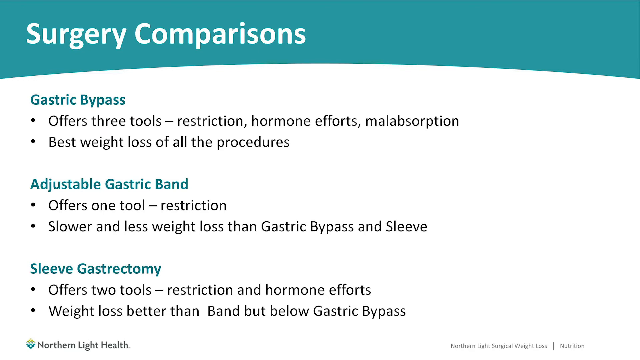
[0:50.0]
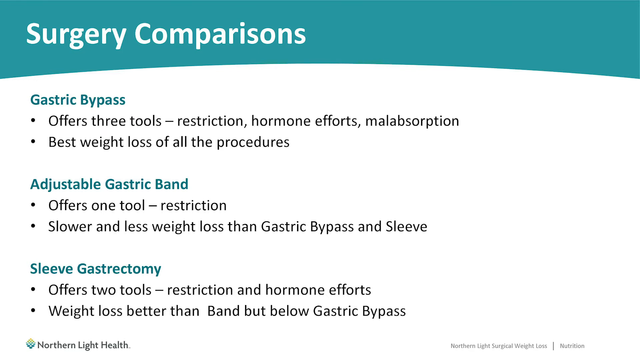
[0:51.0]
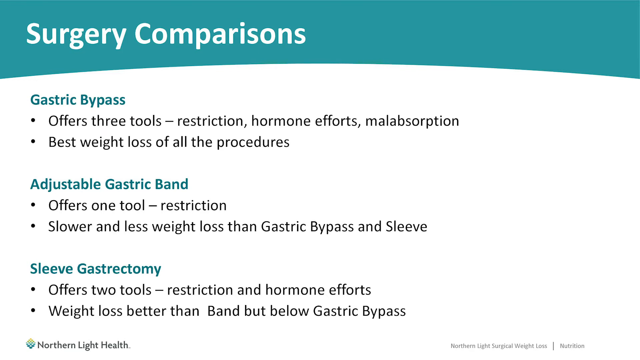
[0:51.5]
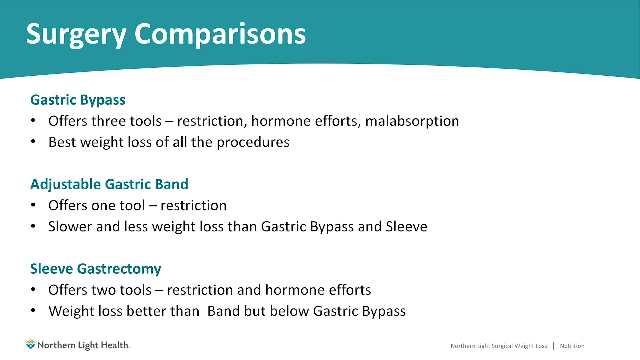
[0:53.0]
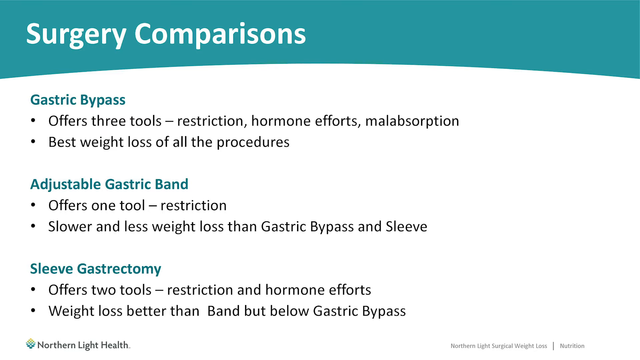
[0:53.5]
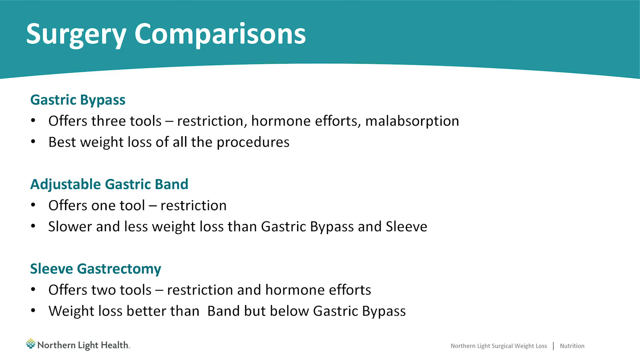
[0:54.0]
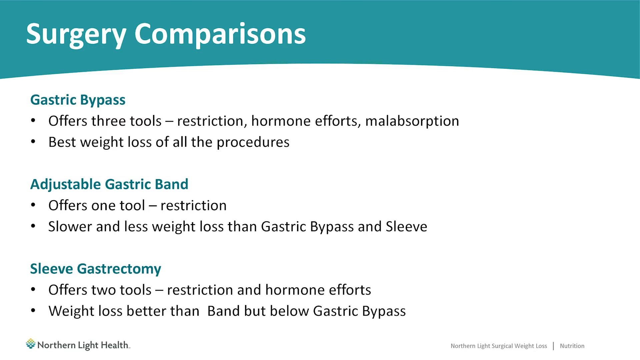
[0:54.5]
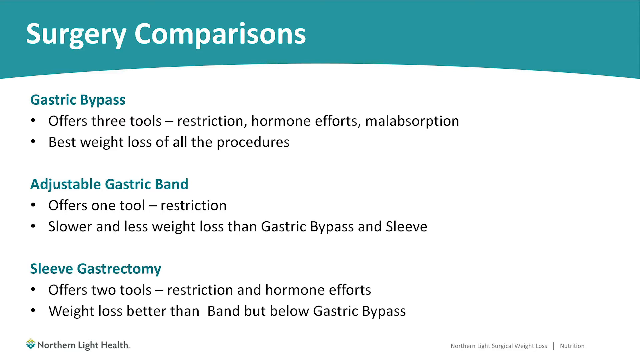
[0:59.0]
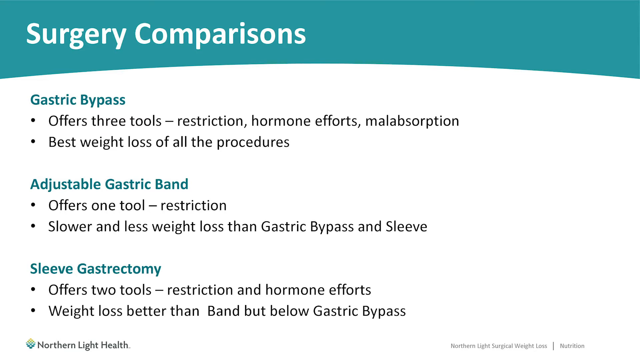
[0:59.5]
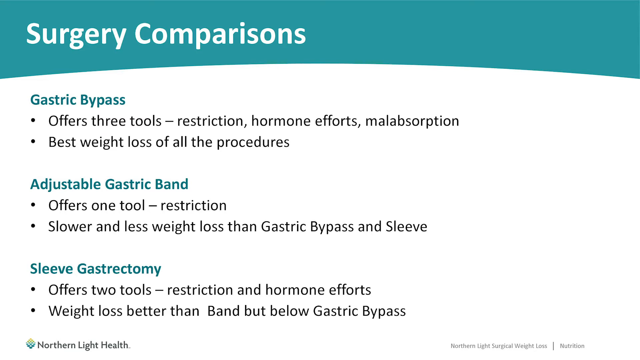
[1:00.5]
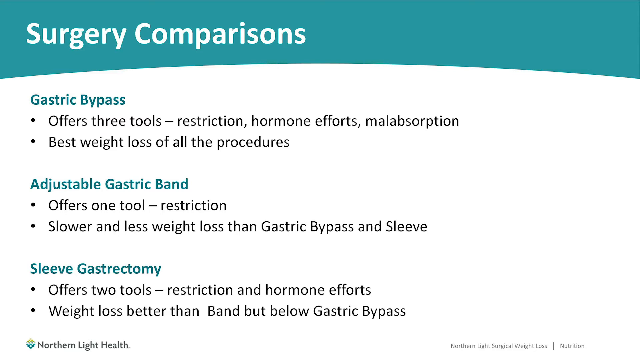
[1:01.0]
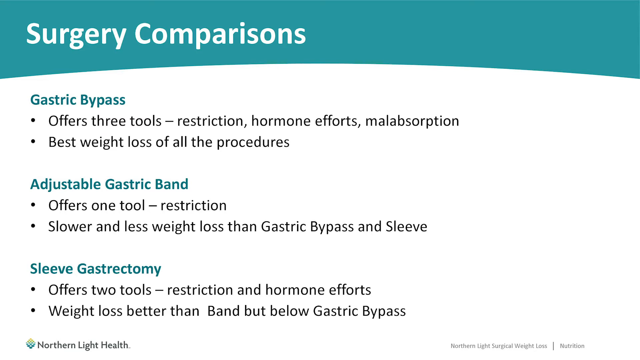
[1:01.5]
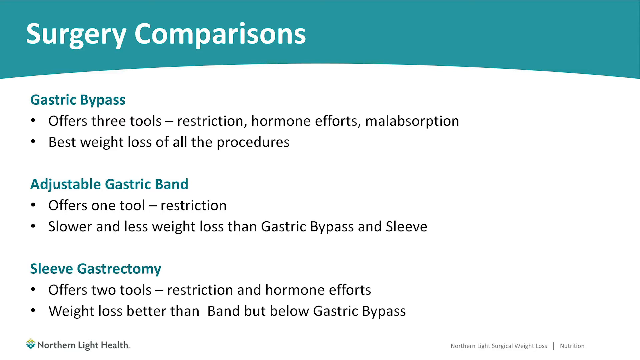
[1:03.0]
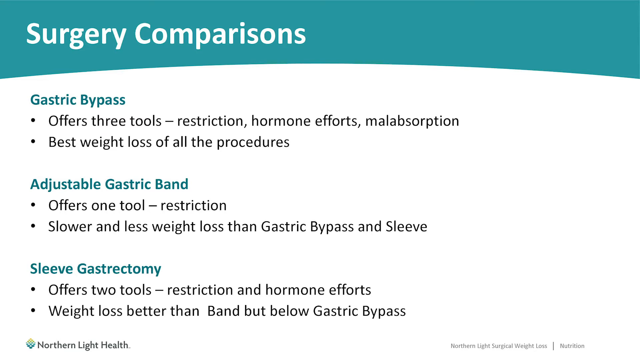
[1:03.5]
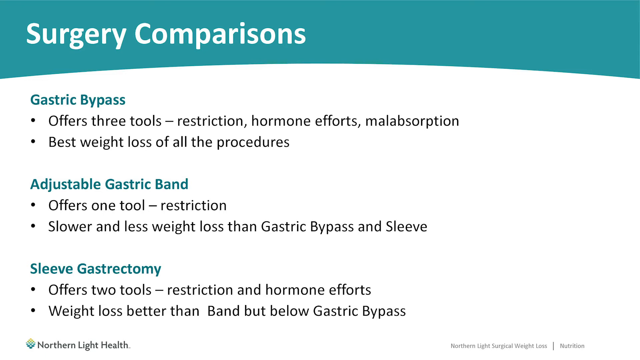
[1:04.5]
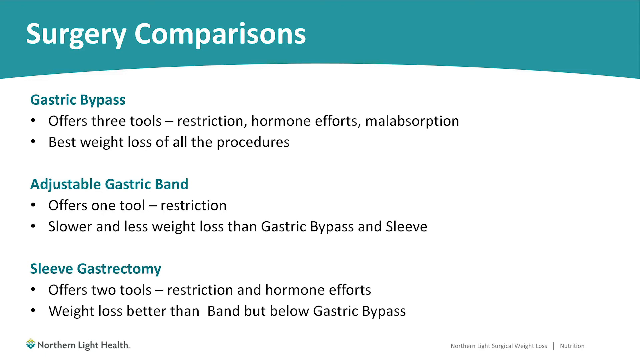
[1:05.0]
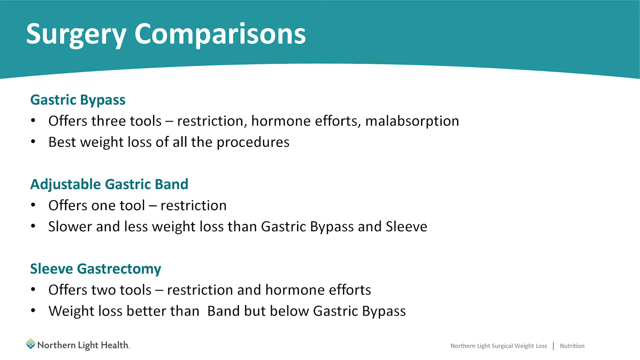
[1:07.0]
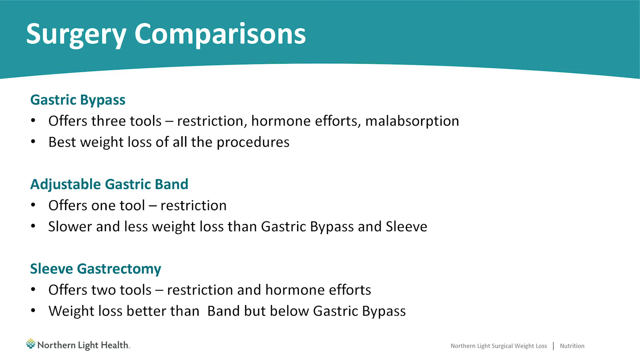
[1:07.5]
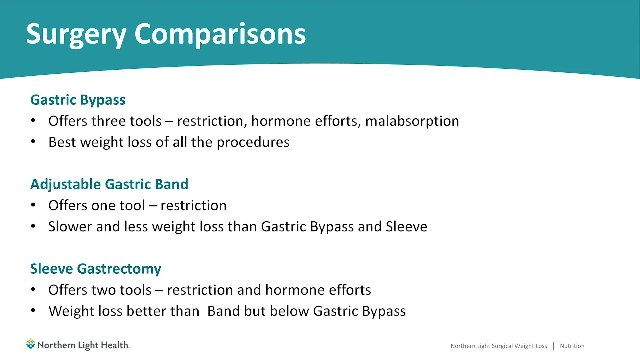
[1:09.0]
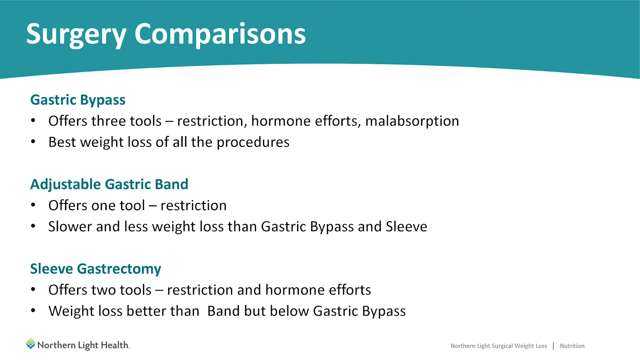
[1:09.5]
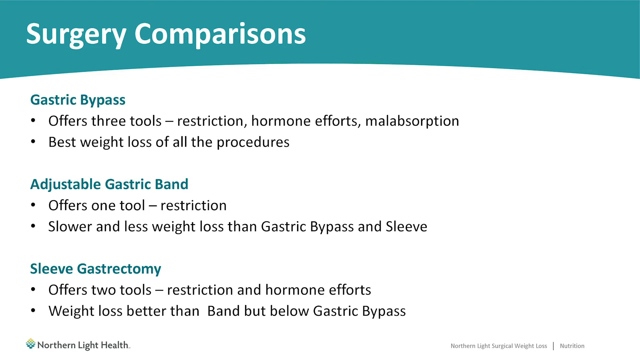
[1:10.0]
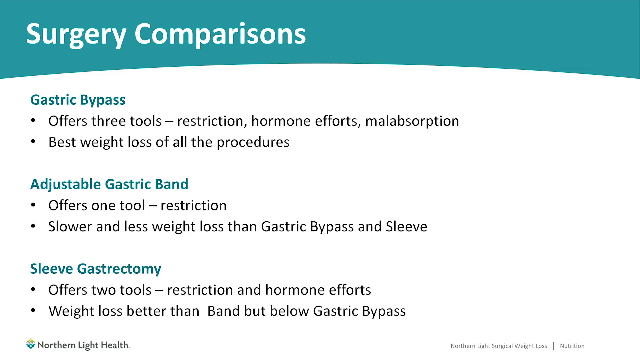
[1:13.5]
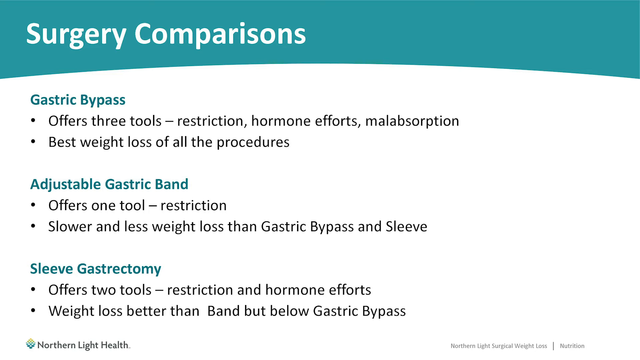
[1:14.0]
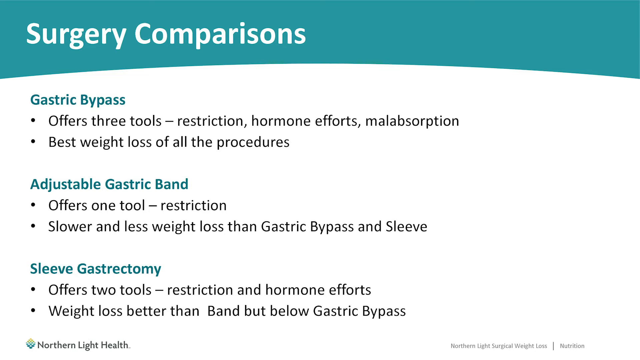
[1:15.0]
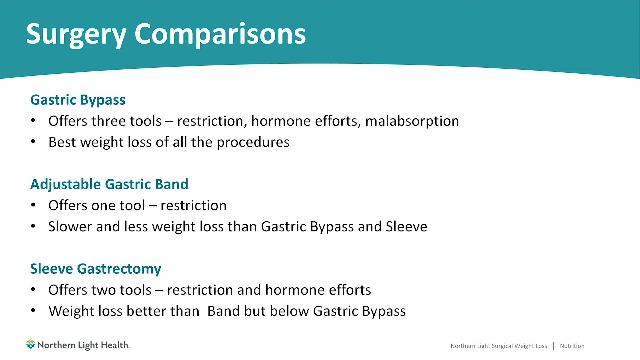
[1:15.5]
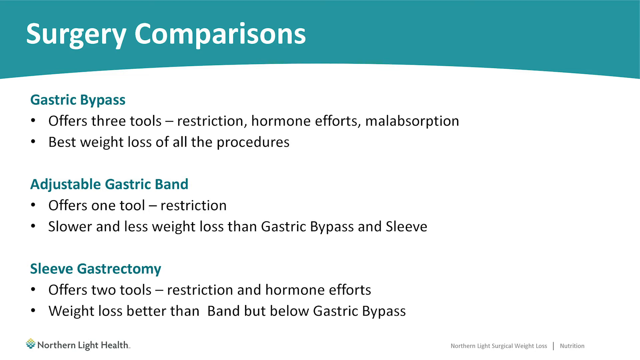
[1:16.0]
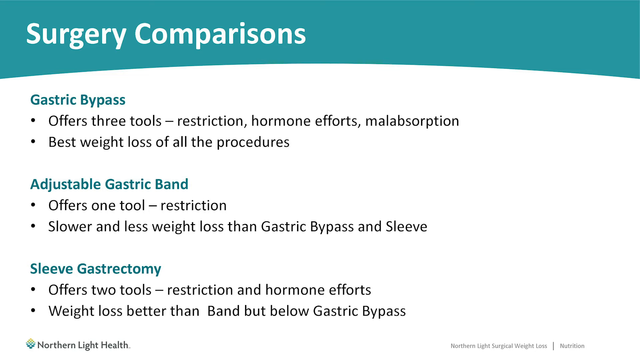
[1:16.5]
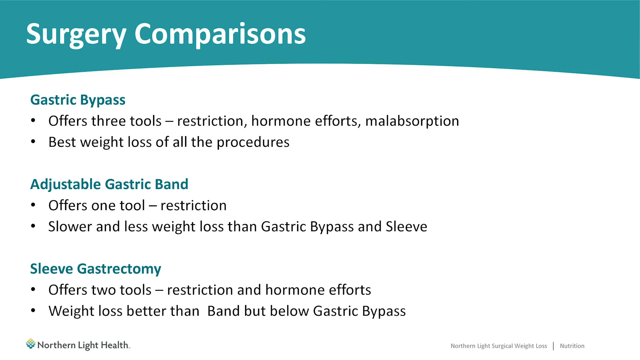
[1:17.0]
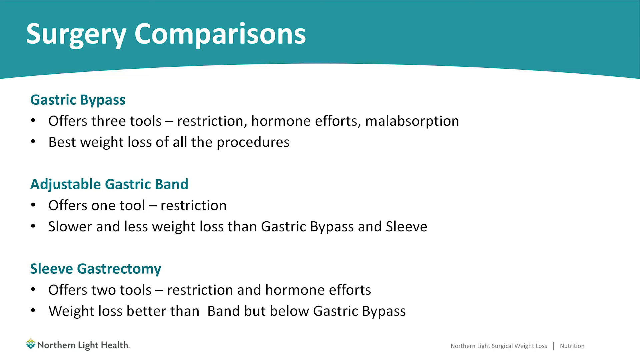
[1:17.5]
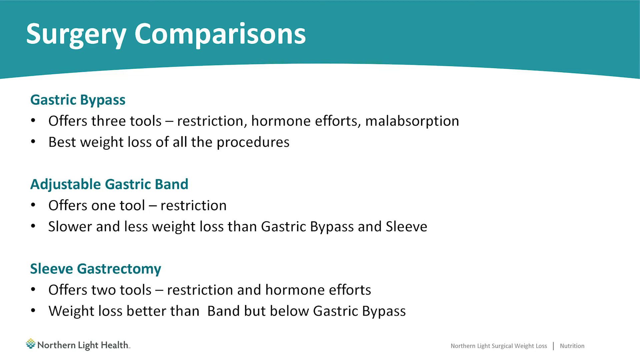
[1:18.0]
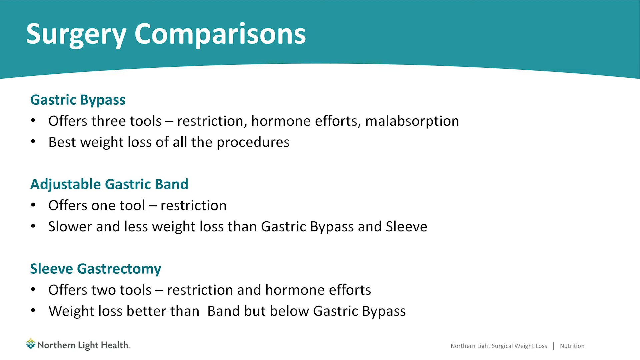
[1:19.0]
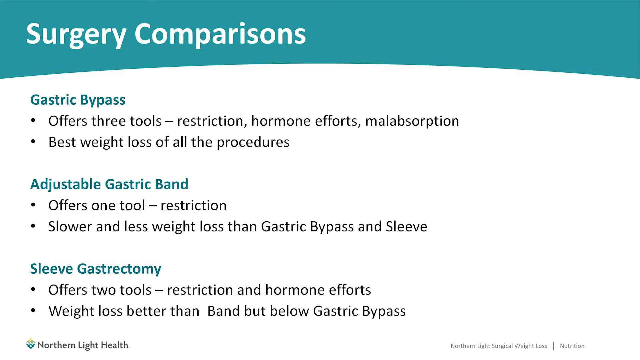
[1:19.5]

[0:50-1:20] A slide details several types of weight loss procedures, with two bullet points for each beneath the title. The very top of the screen is blue, with the words "surgery comparisons" in white font. Below that are the words "gastric bypass" in blue font, followed by two bullet points: "offers three tools, restriction, hormone effects, malabsorption" and "best weight loss of all the procedures." The second procedure reads "adjustable gastric band offers one tool, restriction, slower and less weight loss than gastric bypass and sleeve," and the third reads "sleeve gastrectomy offers two tools, restriction and hormone effects, weight loss better than band but below gastric bypass." A yellow, green, and blue logo with the words "Northern Light Health" is in the bottom left-hand corner, and in the bottom right-hand corner are words in a black font that are too small to read.